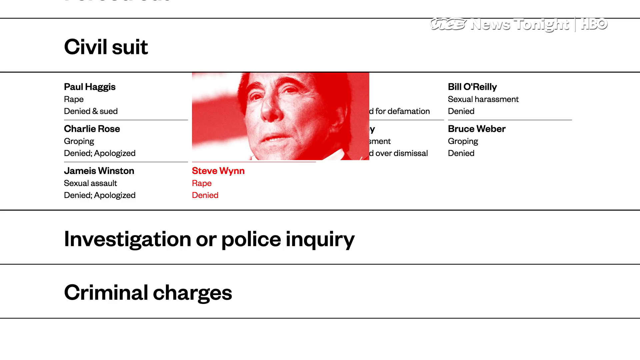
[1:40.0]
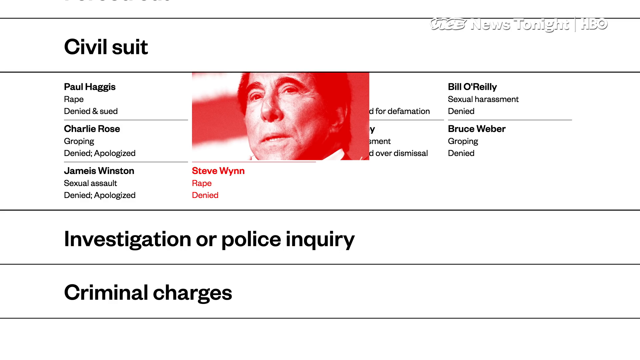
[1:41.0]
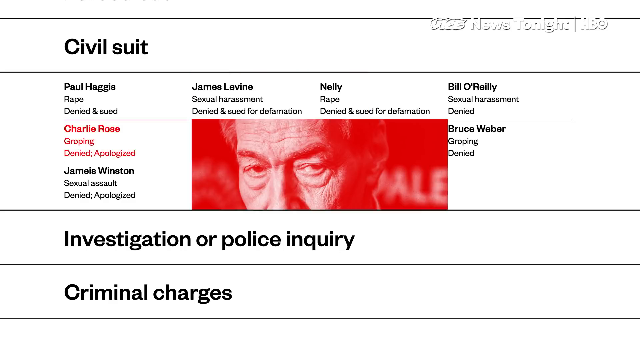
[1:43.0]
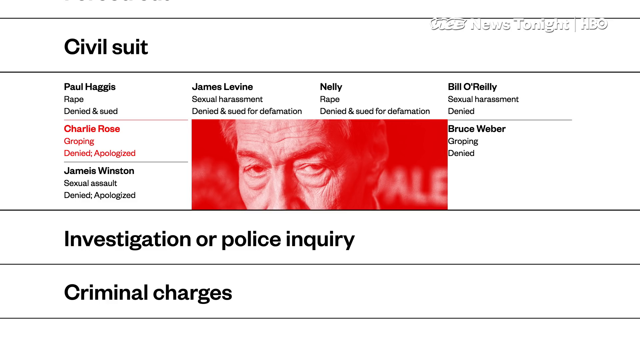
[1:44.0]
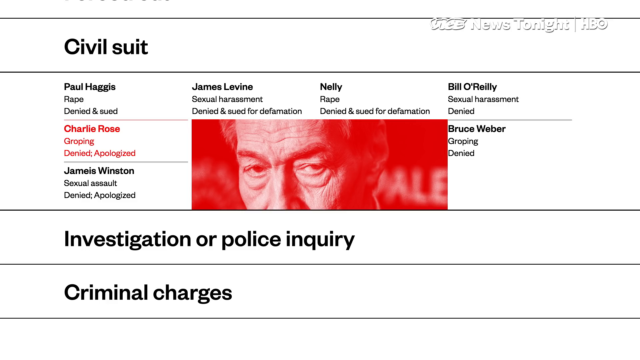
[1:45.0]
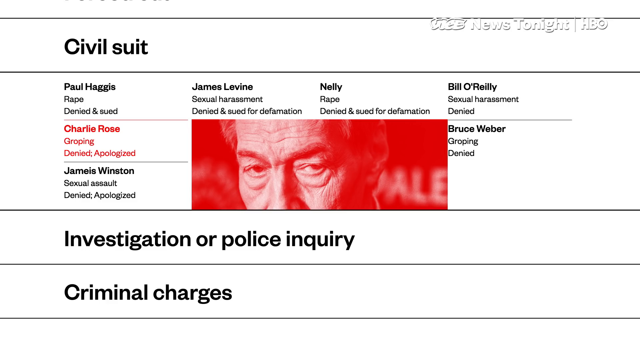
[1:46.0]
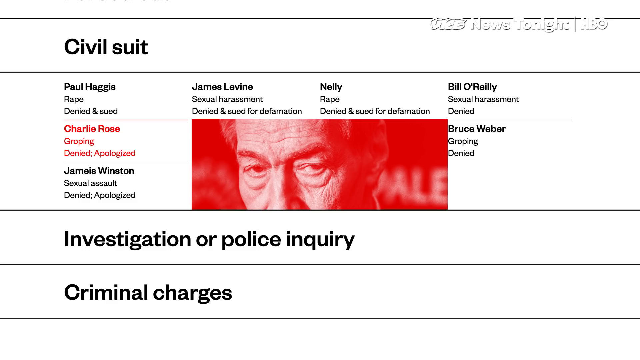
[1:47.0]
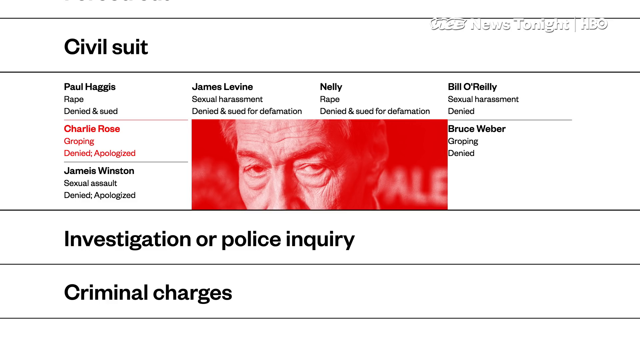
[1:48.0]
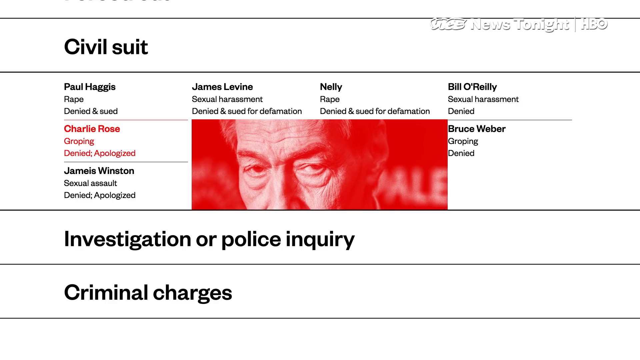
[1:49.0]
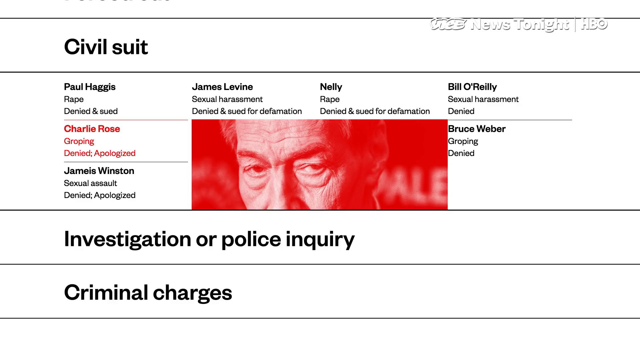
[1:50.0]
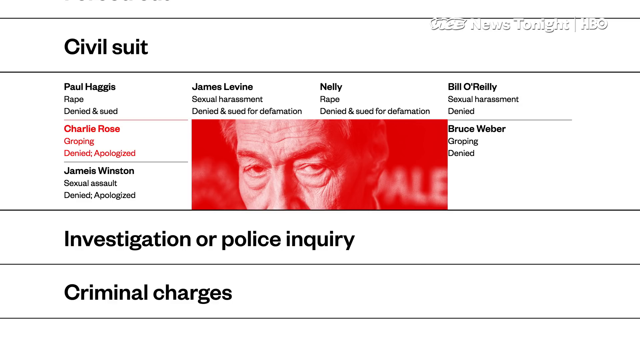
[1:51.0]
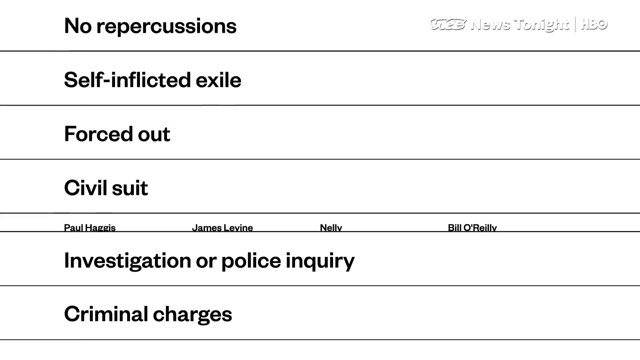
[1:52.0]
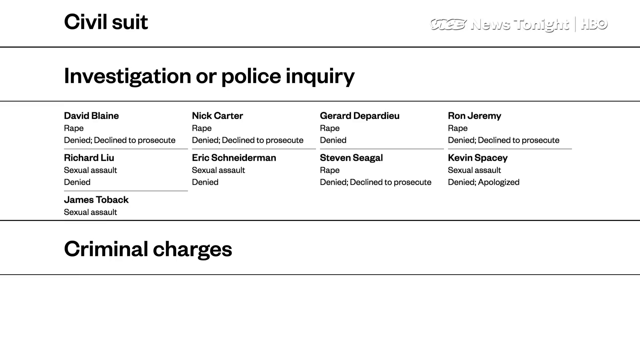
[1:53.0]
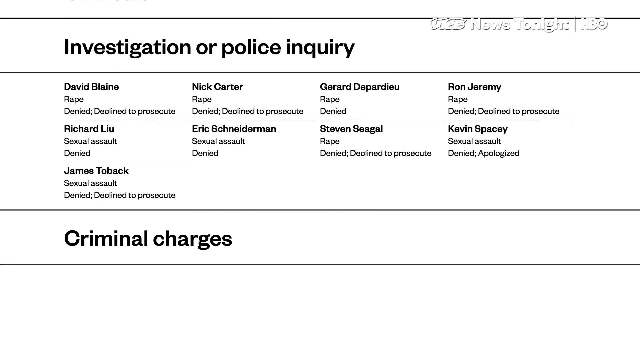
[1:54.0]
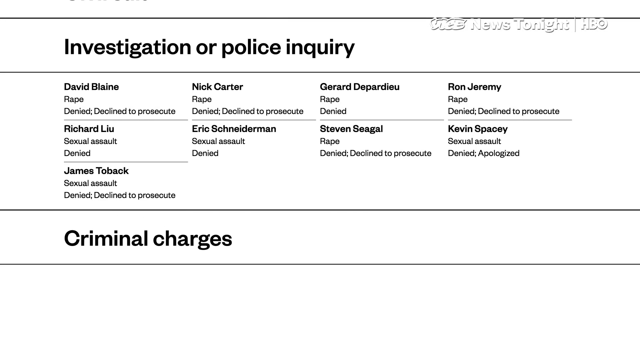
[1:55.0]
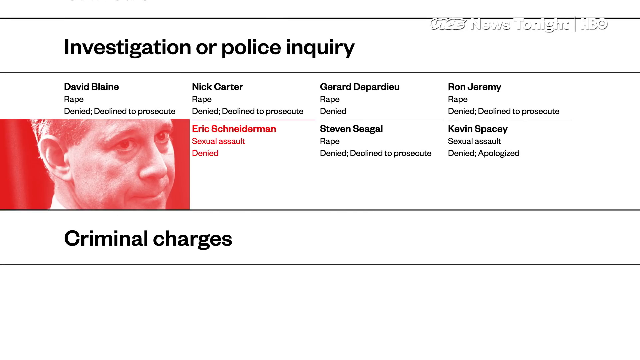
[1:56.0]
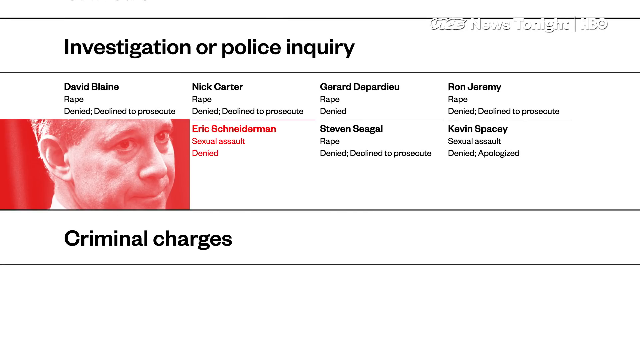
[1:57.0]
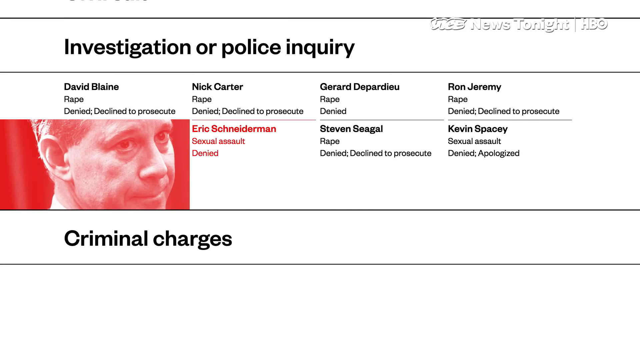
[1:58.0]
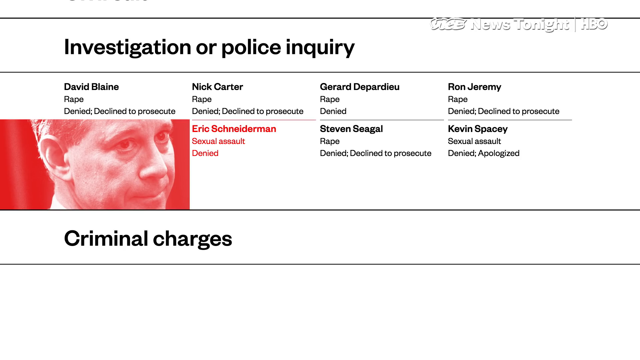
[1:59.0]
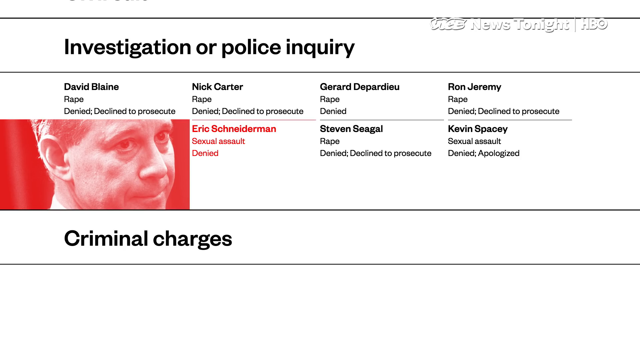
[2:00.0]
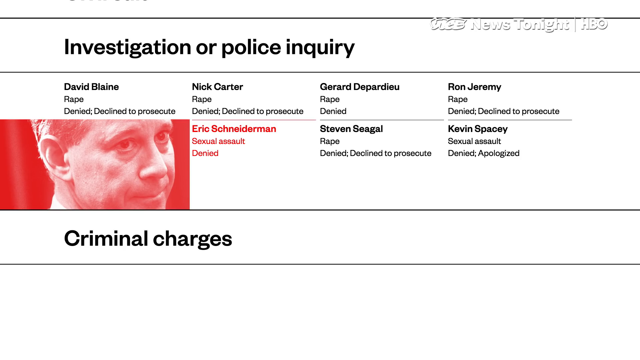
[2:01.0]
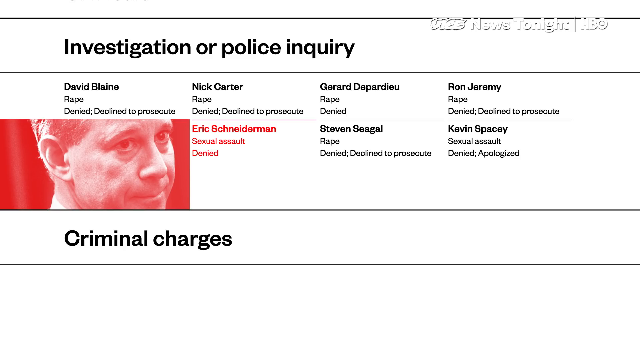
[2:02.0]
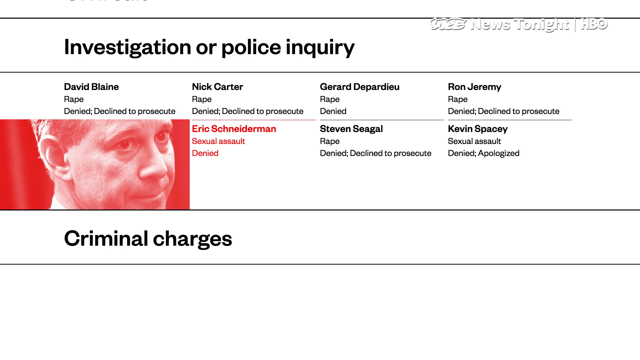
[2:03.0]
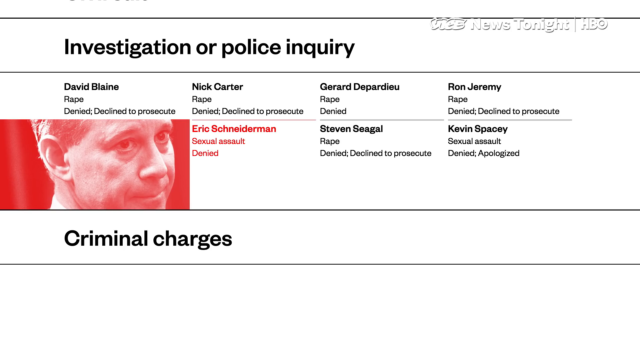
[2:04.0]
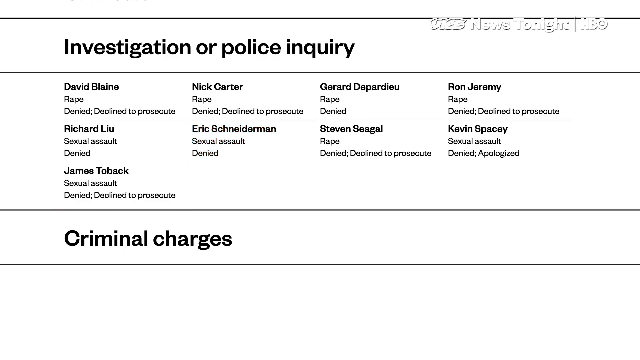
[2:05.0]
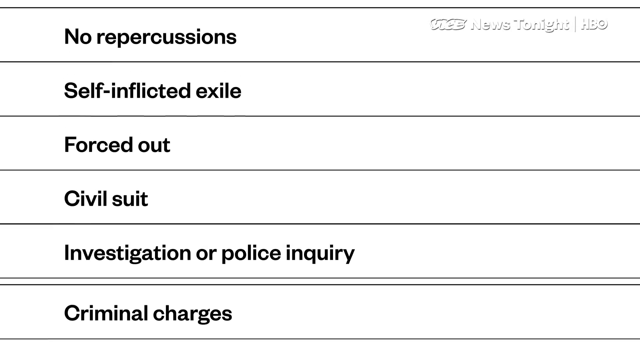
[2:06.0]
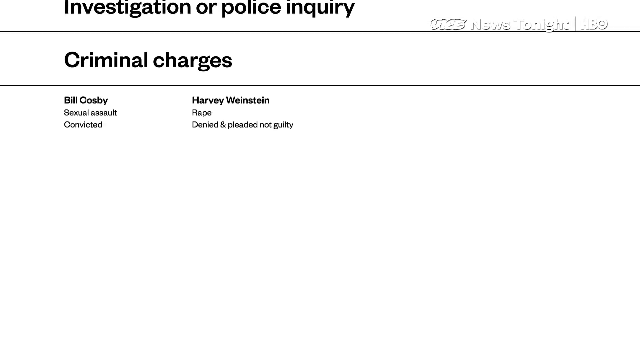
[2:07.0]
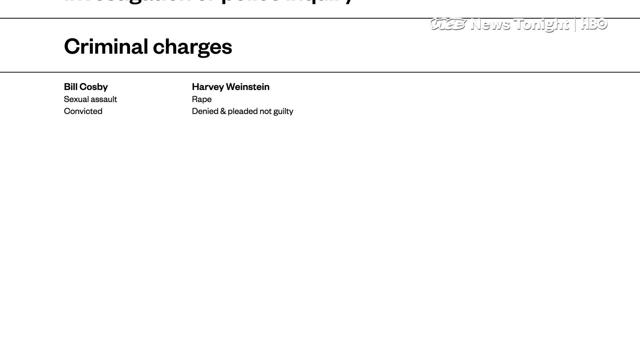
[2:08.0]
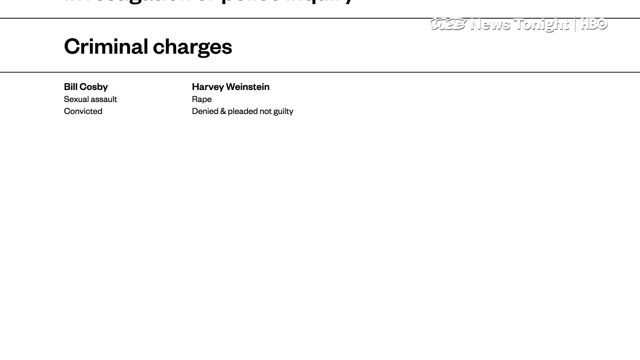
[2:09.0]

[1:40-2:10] The "civil suit" caption and the highlighted picture of Steve Wynn remain. Charlie Rose's face is highlighted next; only the top half of his face is visible, with his eyes looking up toward the left. That closes and "investigation or police inquiry" opens with the names David Blaine, Richard Yew, James Tolbach, Nick Carter, Eric Schneiderman, Gerard Depardieu, Steven Seagal, Ron Jeremy and Kevin Spacey. Eric Schneiderman is highlighted; he faces to the right, looking slightly to his right, with a slightly angry, annoyed or frustrated expression. That closes and "criminal charges" opens, showing the names Bill Cosby and Harvey Weinstein.